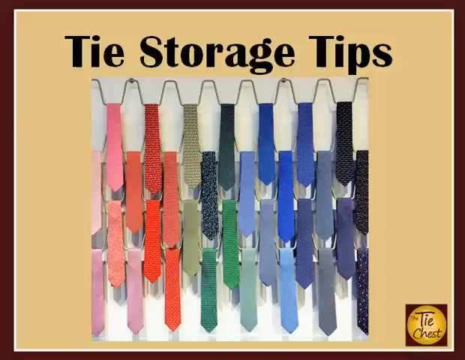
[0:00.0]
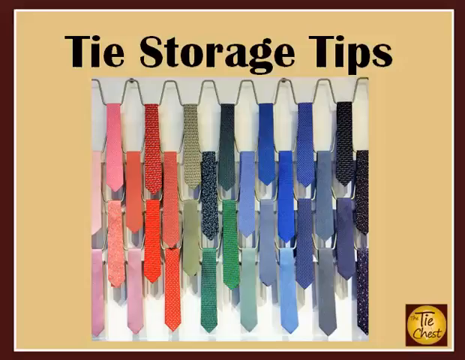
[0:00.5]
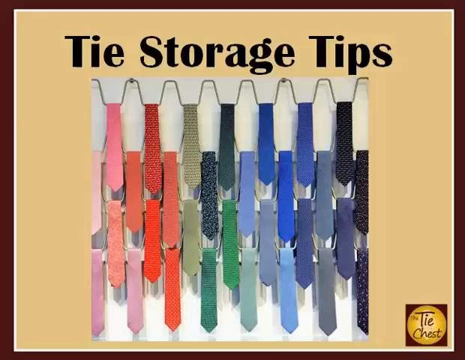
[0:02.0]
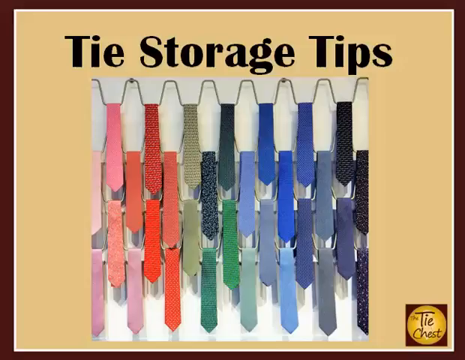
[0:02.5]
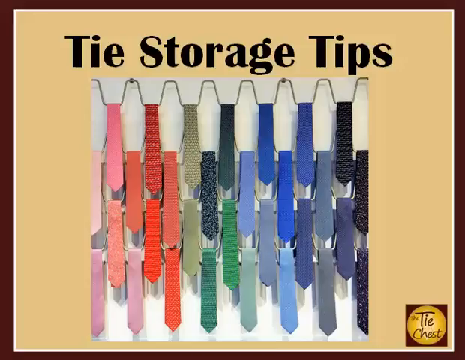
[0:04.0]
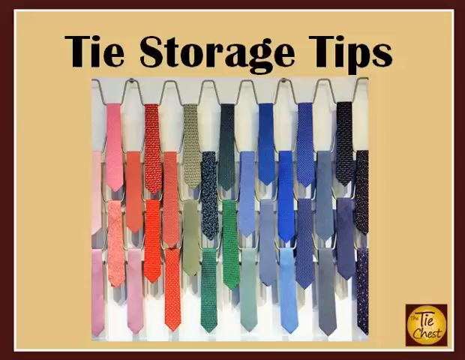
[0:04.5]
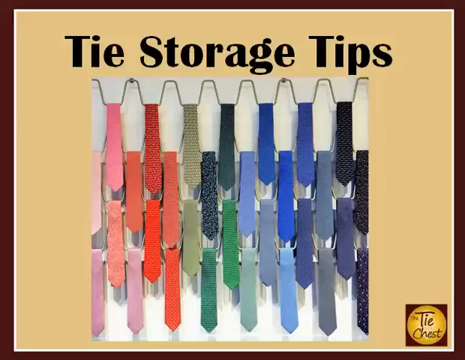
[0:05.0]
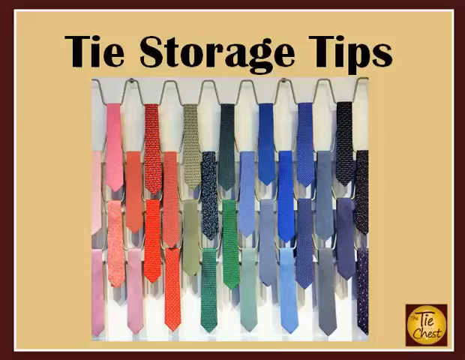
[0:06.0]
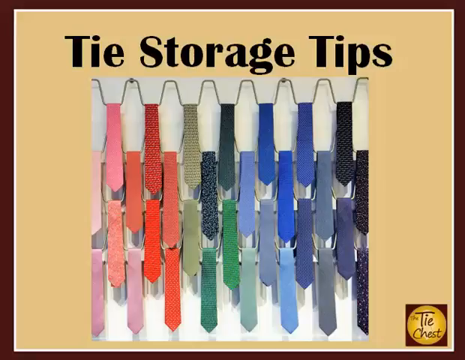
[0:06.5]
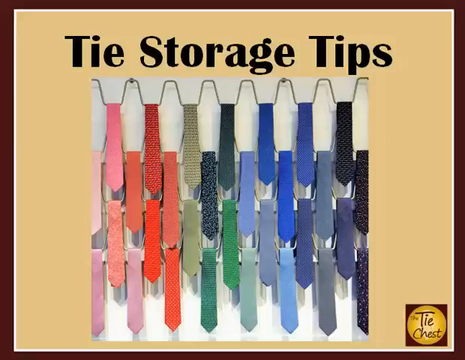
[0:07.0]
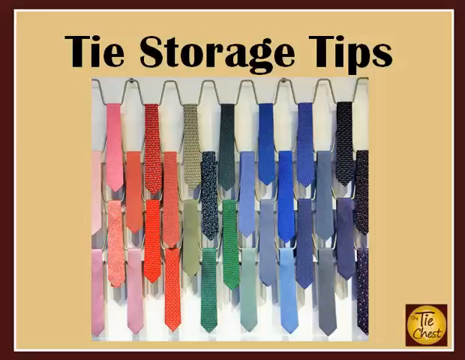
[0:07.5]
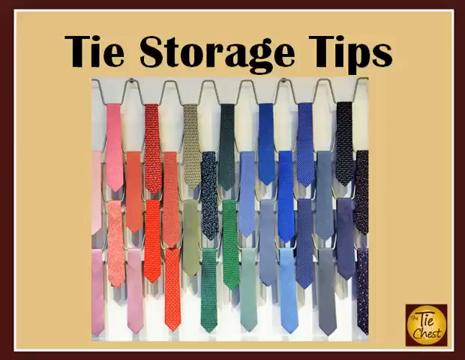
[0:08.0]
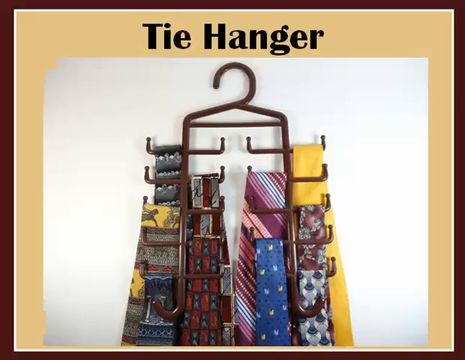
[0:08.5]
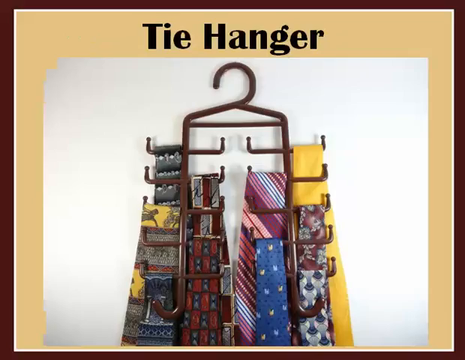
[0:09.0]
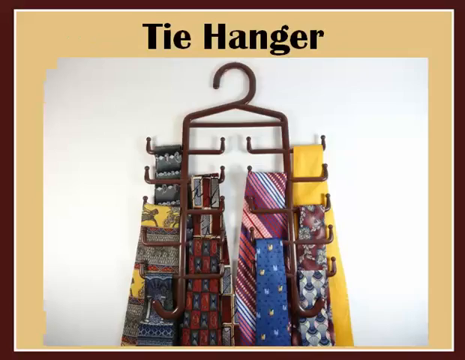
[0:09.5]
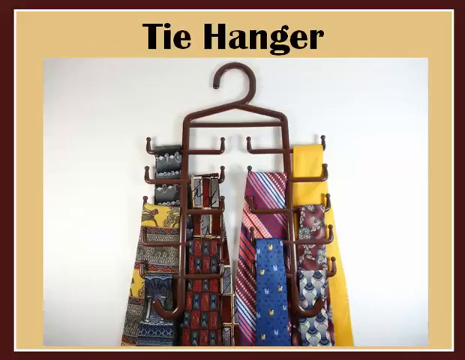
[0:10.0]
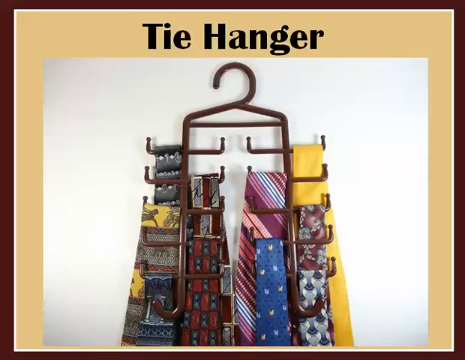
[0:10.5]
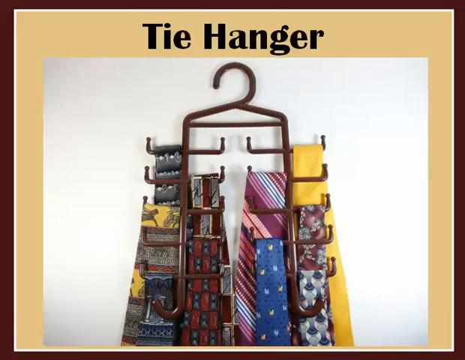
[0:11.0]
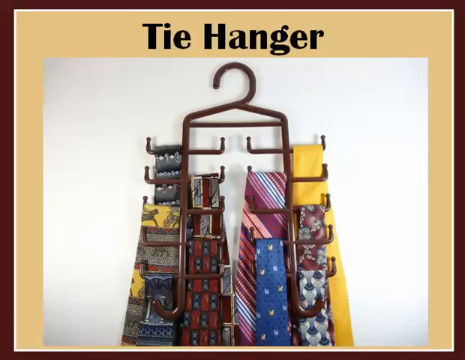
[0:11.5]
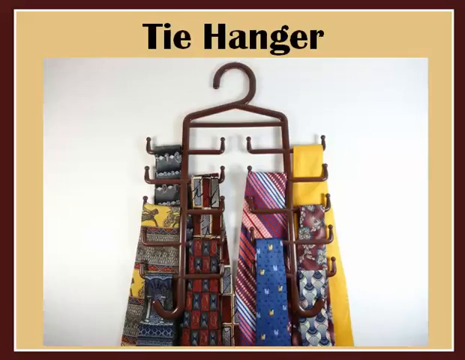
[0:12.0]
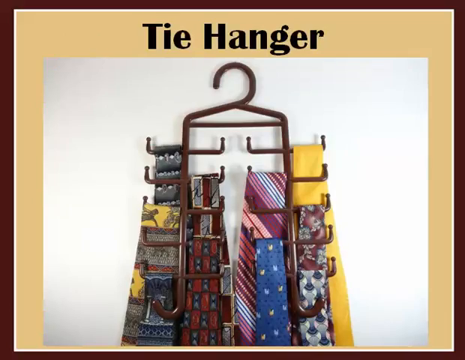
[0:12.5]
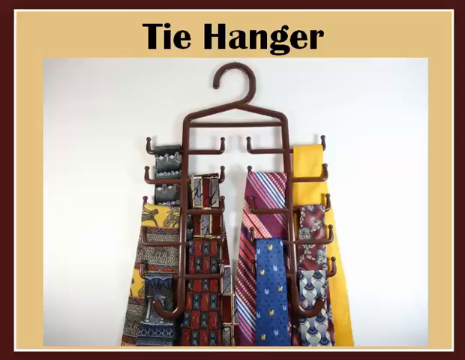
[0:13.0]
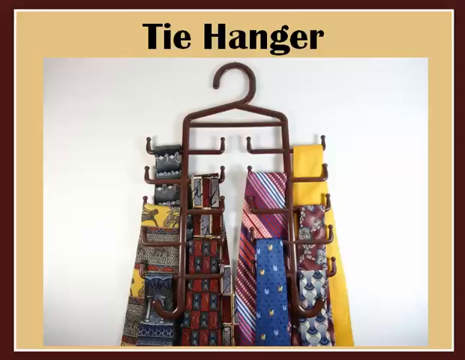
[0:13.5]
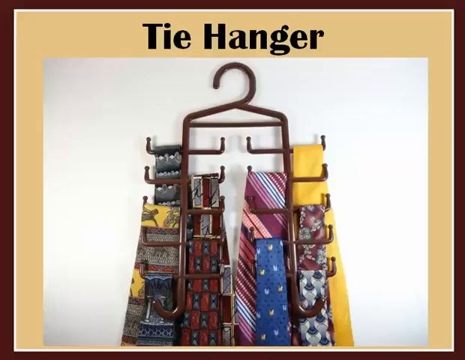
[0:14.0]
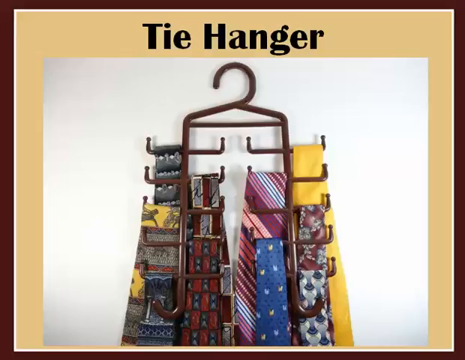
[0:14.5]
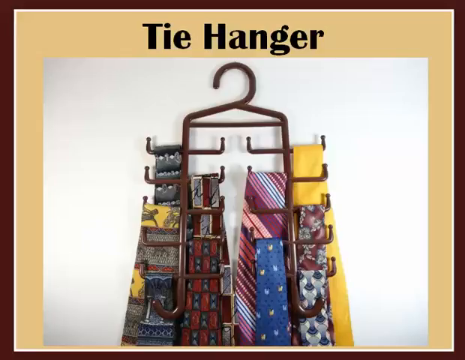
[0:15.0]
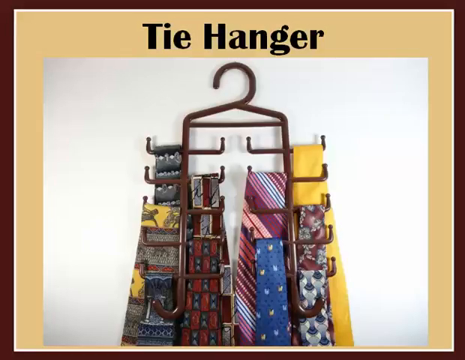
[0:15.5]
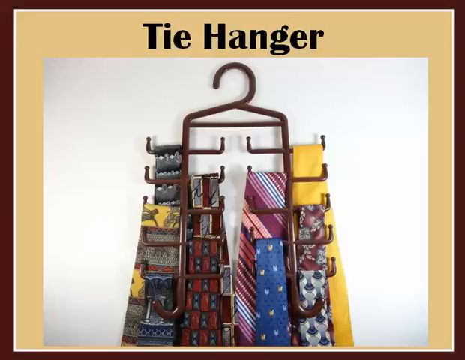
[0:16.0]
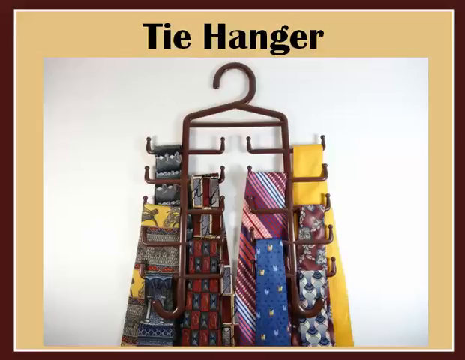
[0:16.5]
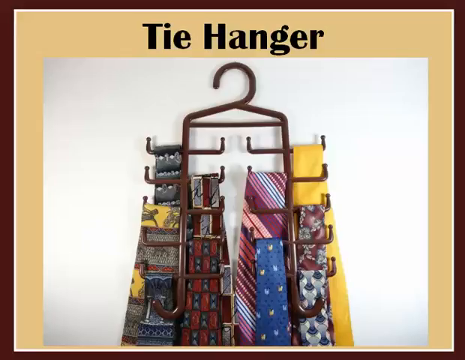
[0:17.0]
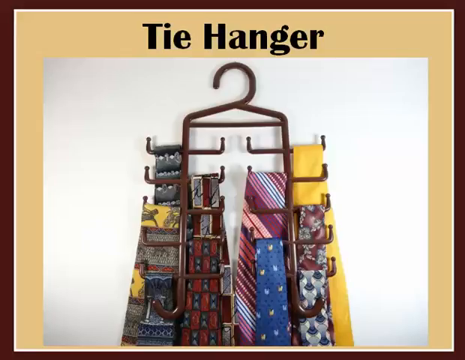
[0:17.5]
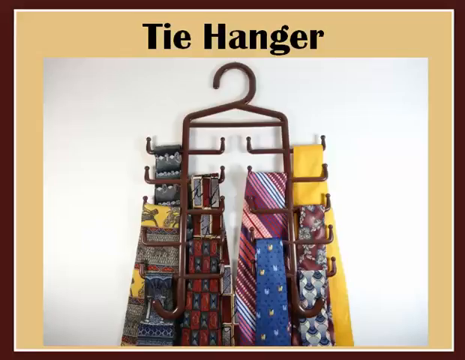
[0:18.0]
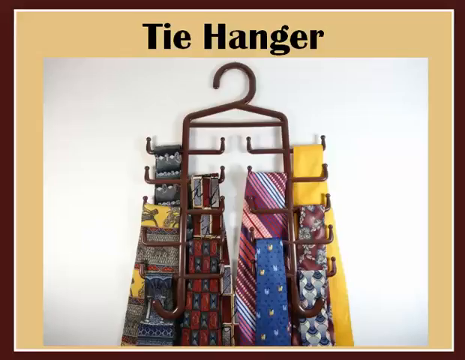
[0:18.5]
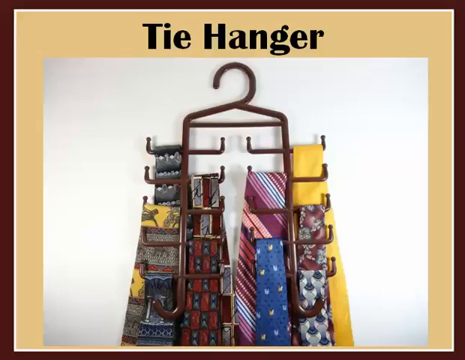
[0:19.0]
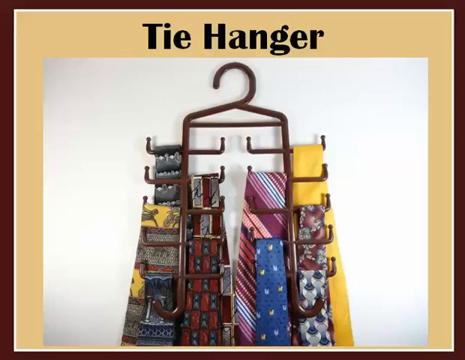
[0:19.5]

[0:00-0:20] The title "Tie storage tips" appears at the top as the heading, and in the bottom right corner "the Tie chest" is written in a yellow circle inside a black square, apparently indicating where the video comes from. The picture shows about 30 ties hanging on metal in a zigzag shape. The ties have different colours and patterns: a pink tie, a peach tie, a red one with white dots, green, gray, blue, and black with white designs. Next, a title reads "Tie Hanger" and shows a brown hanger designed to hold many ties. Yellow, purple, pink, blue, gray, black and red ties hang on it, and the hanger is placed on a white background.